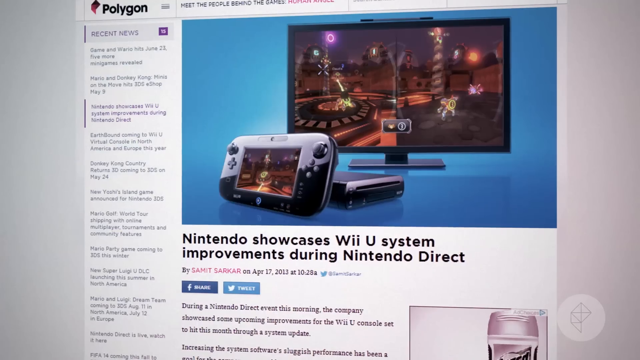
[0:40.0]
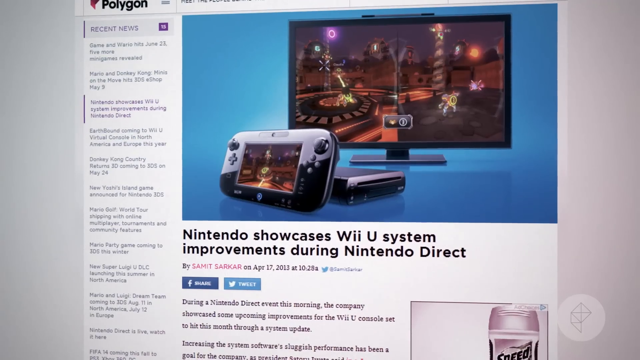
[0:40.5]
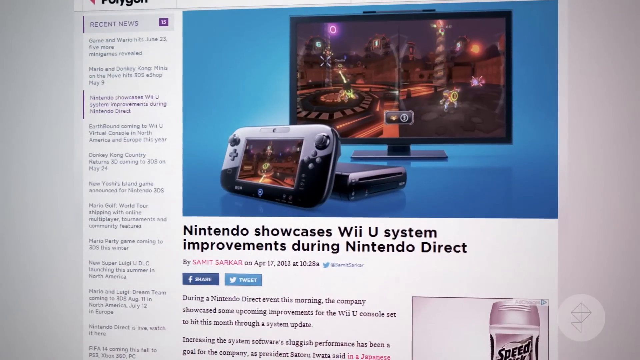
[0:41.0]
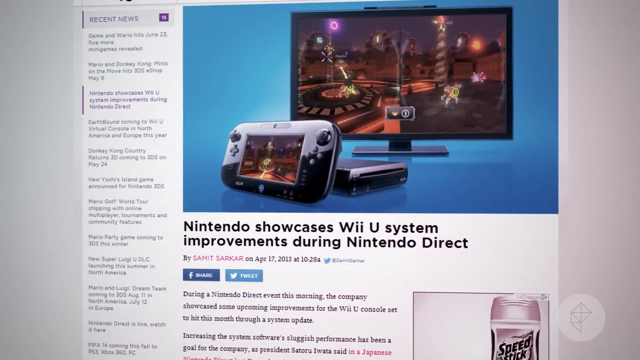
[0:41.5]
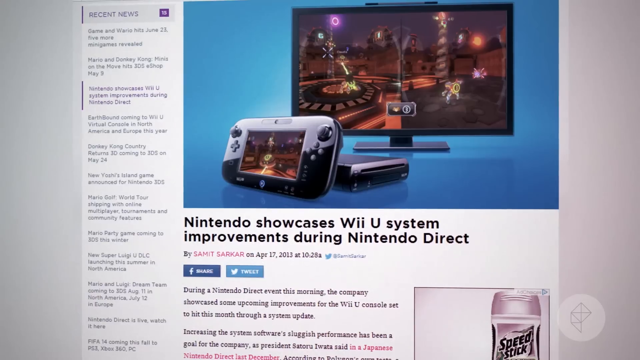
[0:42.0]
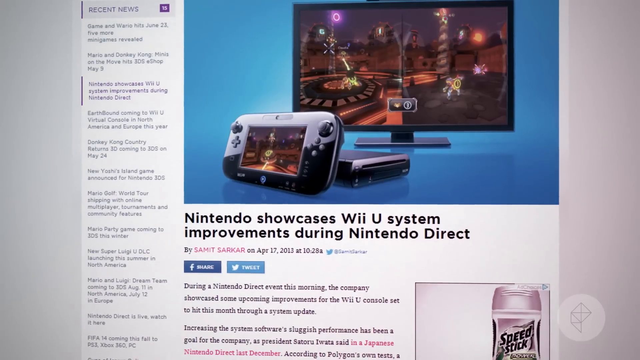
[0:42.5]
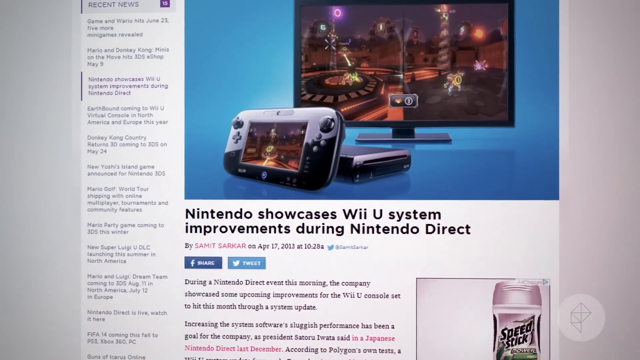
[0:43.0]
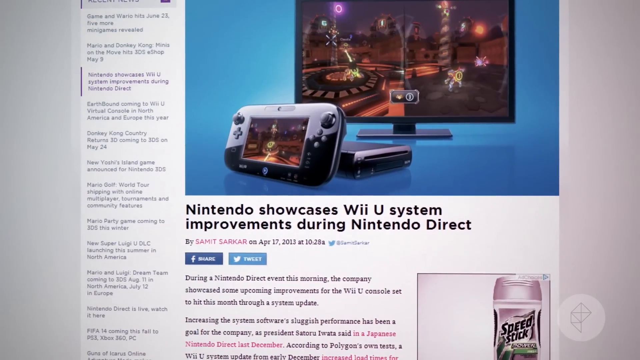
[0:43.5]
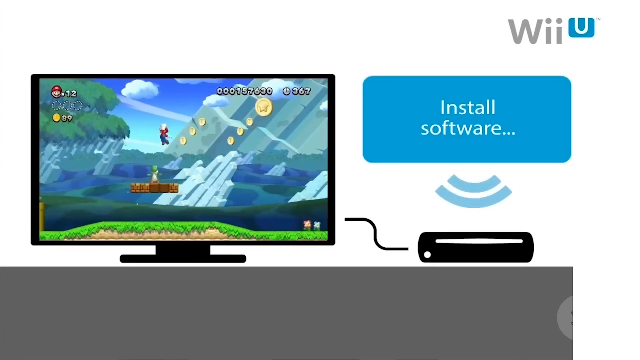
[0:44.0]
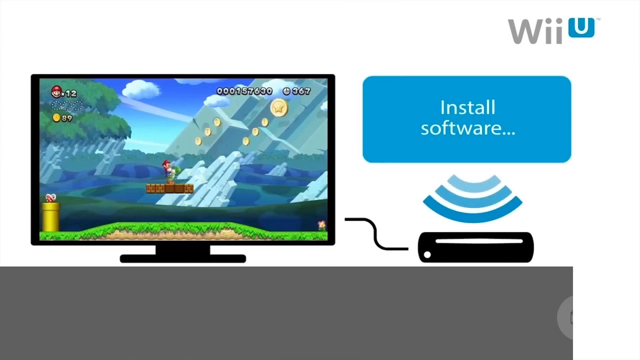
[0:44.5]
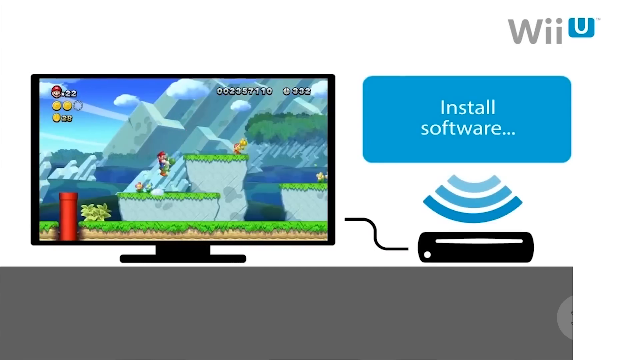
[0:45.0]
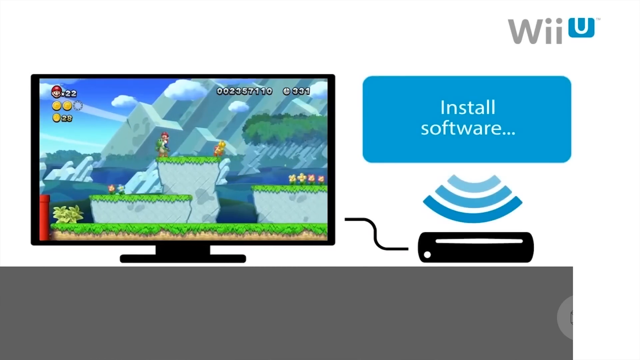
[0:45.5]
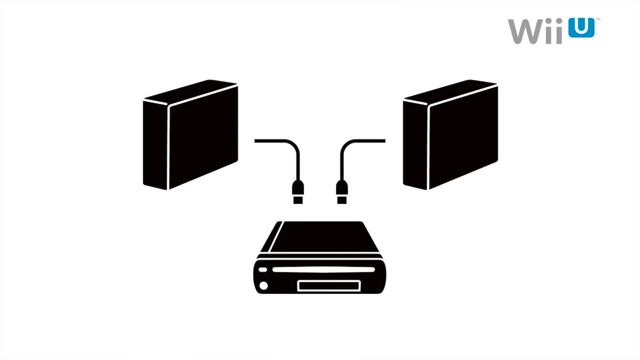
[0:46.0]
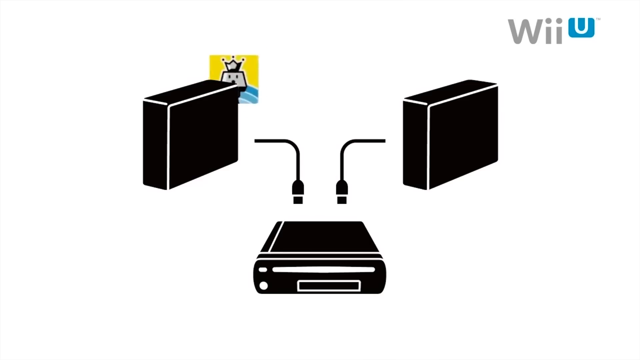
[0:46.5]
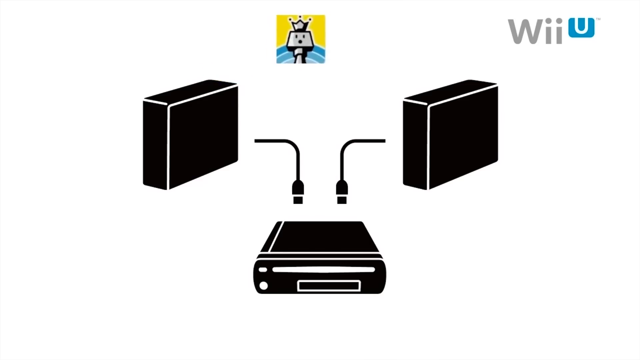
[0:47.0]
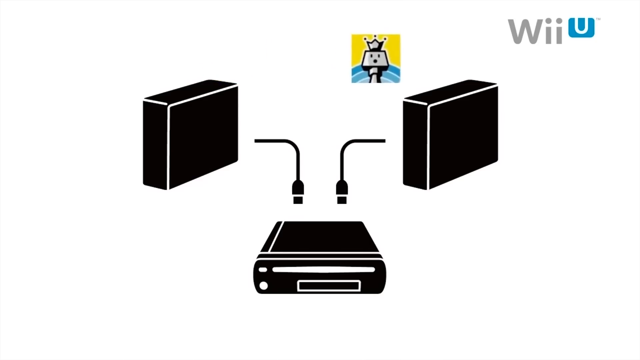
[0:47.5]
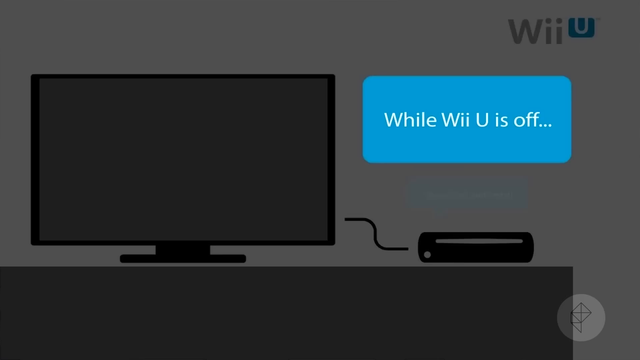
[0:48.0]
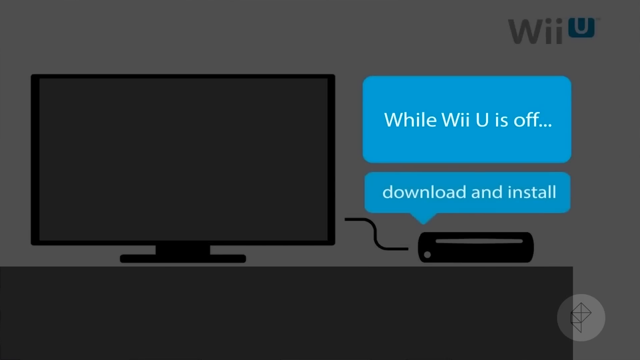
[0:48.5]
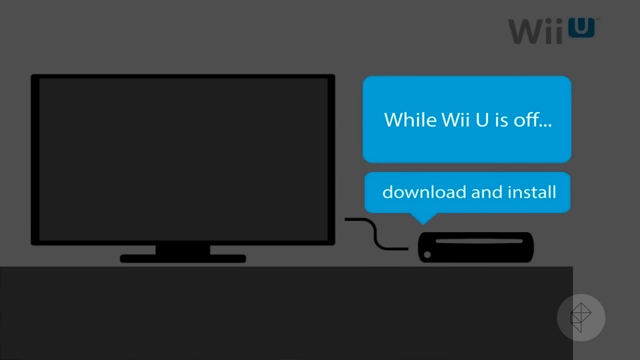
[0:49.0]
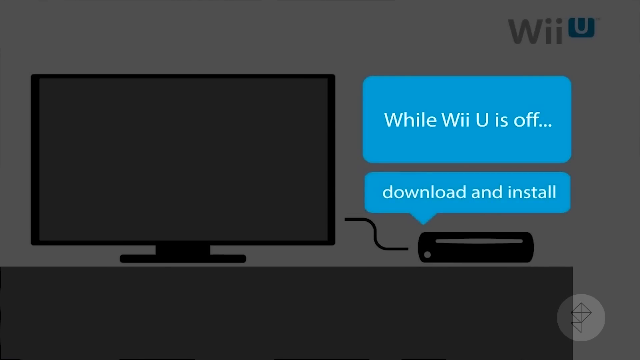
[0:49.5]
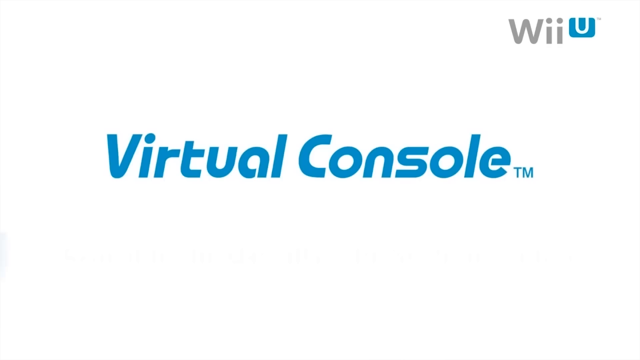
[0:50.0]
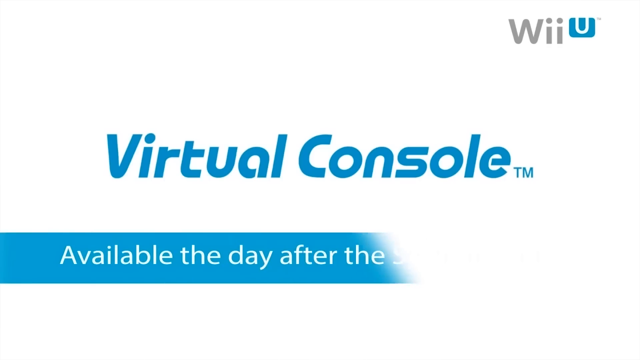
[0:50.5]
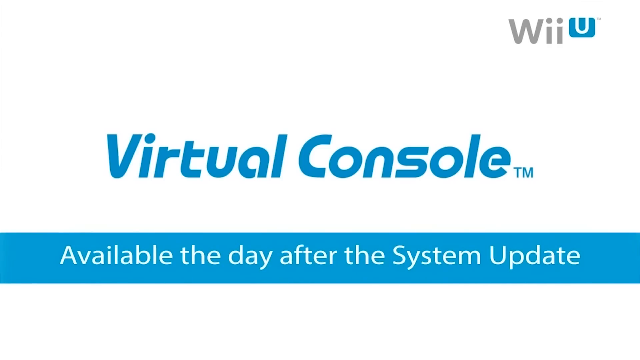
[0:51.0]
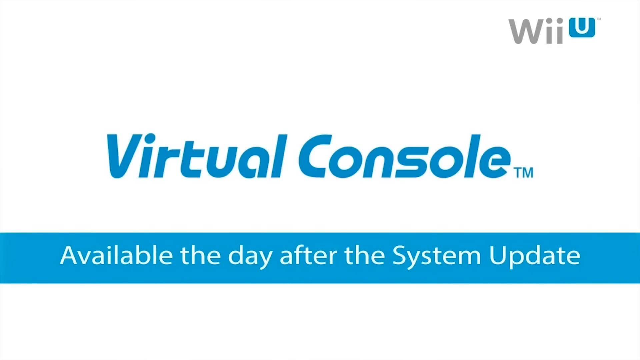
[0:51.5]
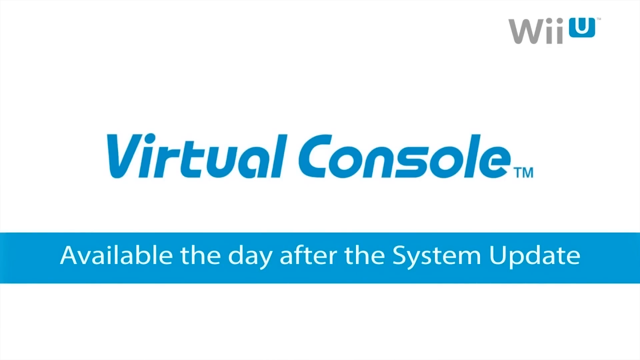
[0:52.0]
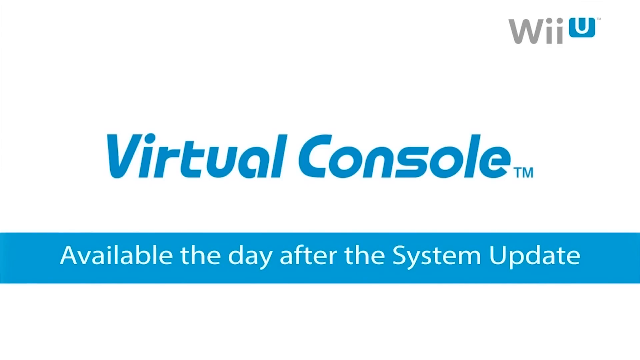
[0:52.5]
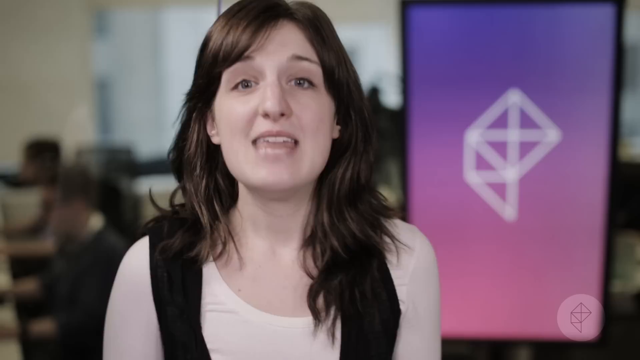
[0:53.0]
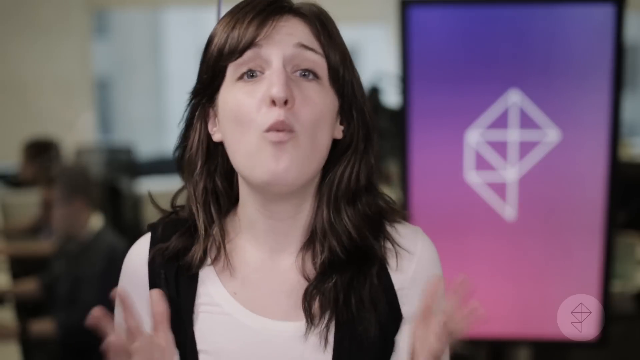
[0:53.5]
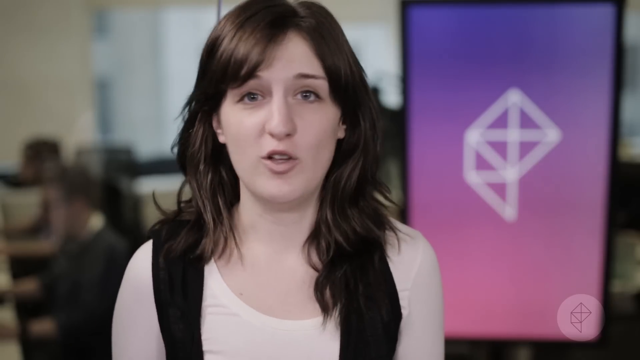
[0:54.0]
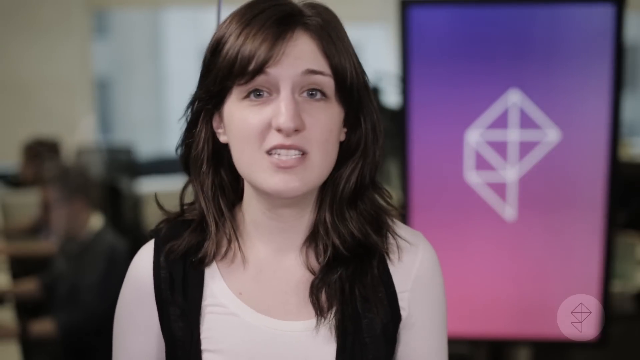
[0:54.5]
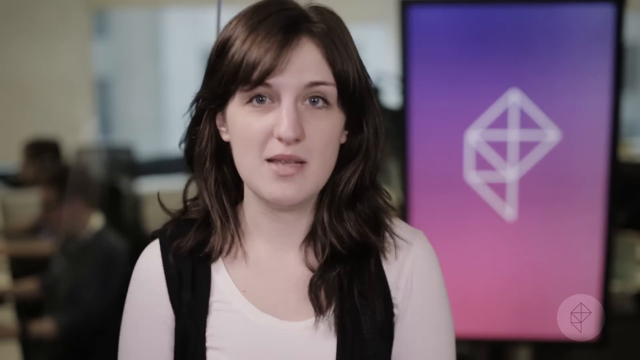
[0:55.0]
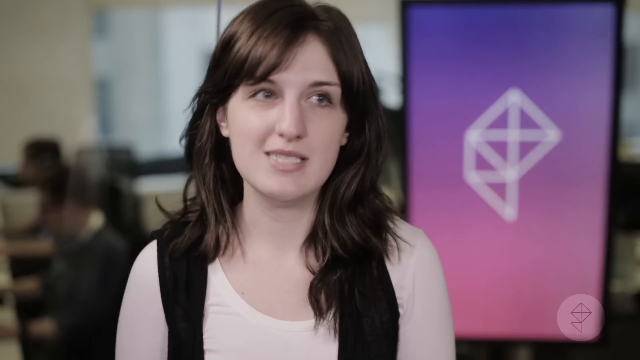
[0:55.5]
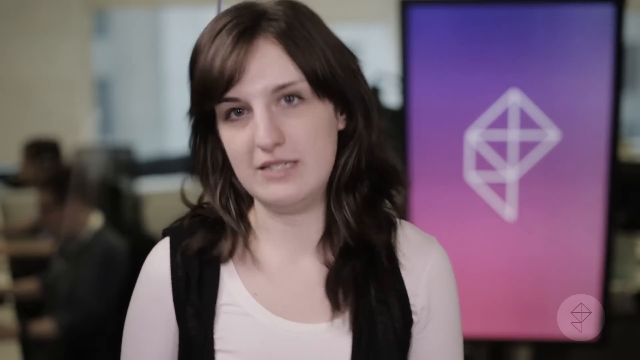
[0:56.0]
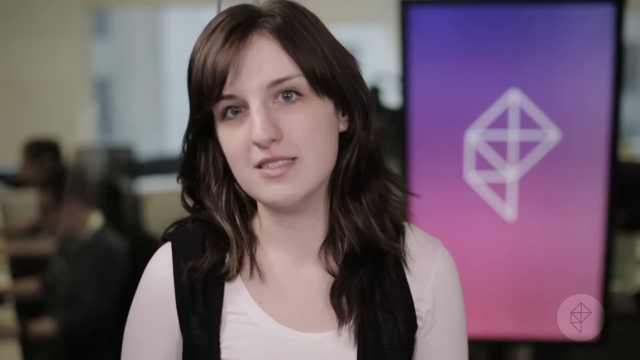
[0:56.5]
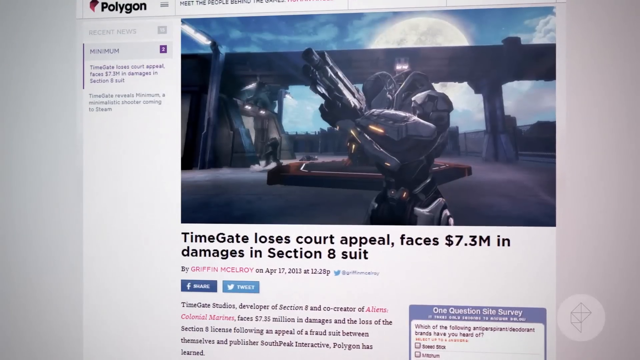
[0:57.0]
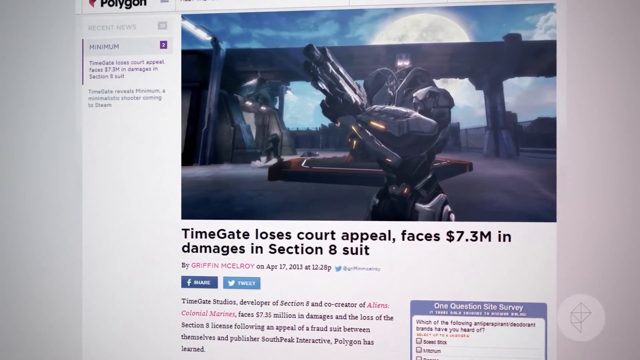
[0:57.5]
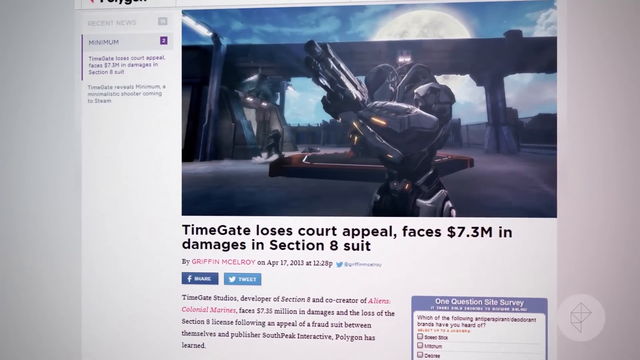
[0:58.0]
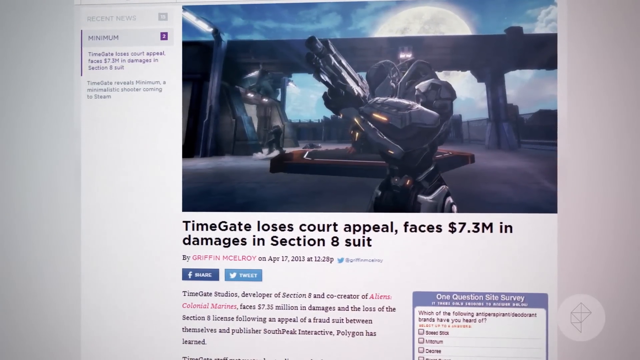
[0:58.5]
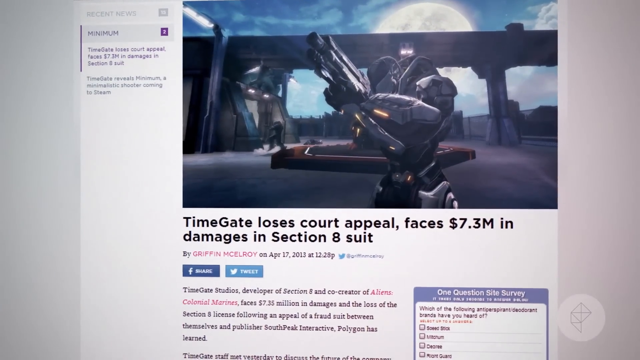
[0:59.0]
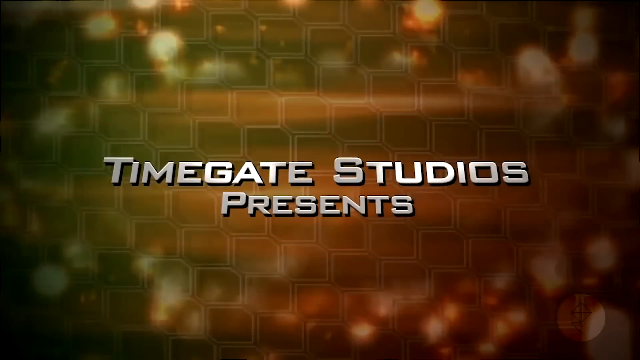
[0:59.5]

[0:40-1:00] An article on the Polygon website appears with a headline beginning "nintendo showcase." The article has a picture of a Wii U with a game on its tablet, and a TV monitor showing the same game. As the view pans down, a cartoon drawing of a TV and a Wii U appears, with actual gameplay on the TV, apparently a 3D Super Mario game, showing Mario on top of Yoshi collecting coins. Next to these cartoon images is blue text reading "install software" and the Wii logo. The video cuts to a cartoon picture of two blocks and a clip-art-style Wii U, with a picture of some sort moving from one block to the other, then to another cartoon of a TV with the text "while your wii u is off." A title card reads "virtual console available the day after the system update." The video cuts back to the reporter, now zoomed in from the shoulders up, talking in a very professional manner. Another Polygon article follows, its headline beginning "timegate loses" and mentioning "7.3 million" and "section 8 suit," with a picture of something like a mecha robot holding a gun.